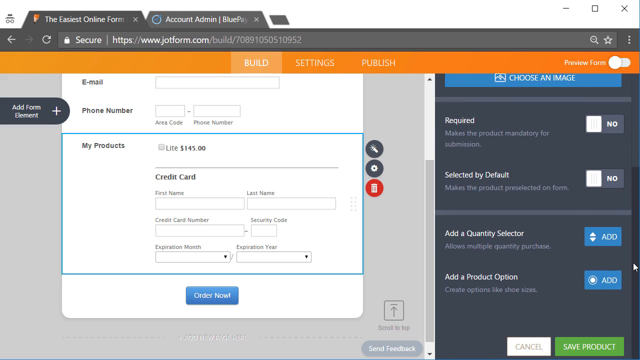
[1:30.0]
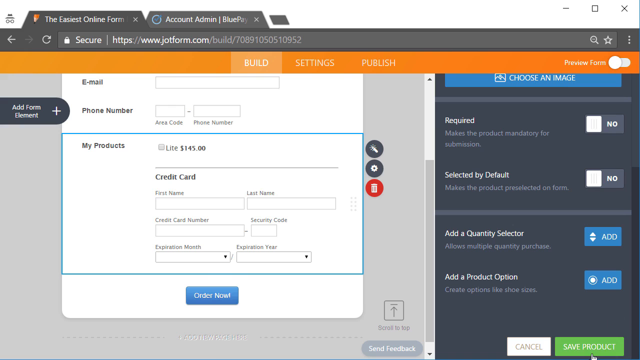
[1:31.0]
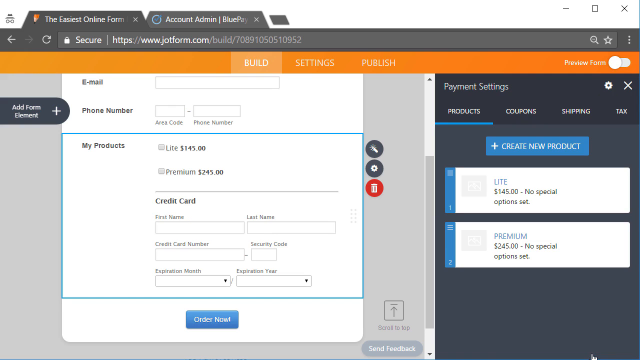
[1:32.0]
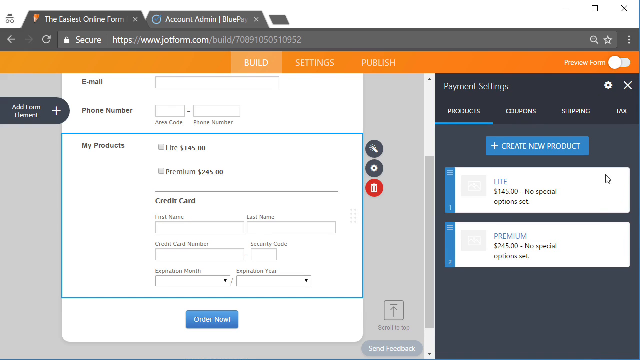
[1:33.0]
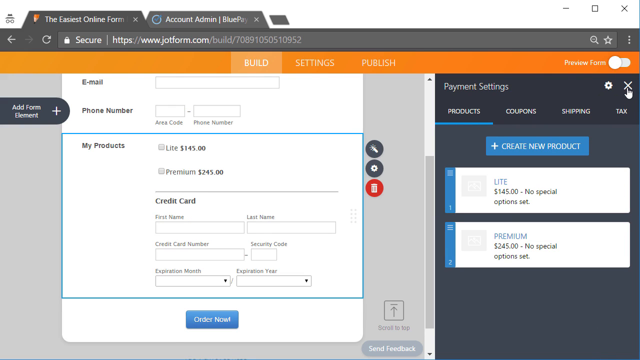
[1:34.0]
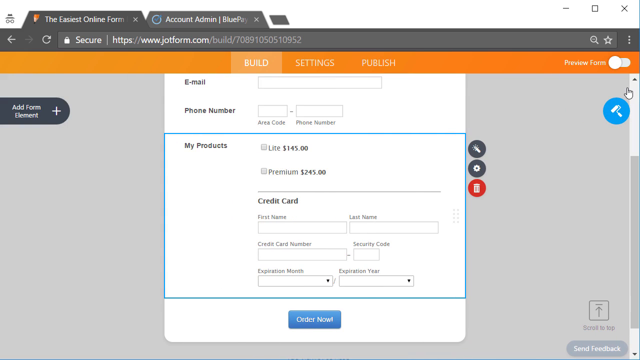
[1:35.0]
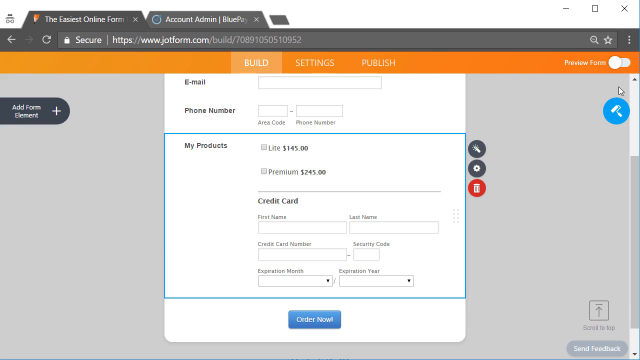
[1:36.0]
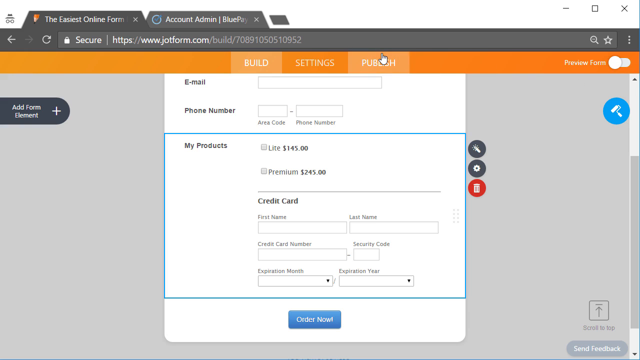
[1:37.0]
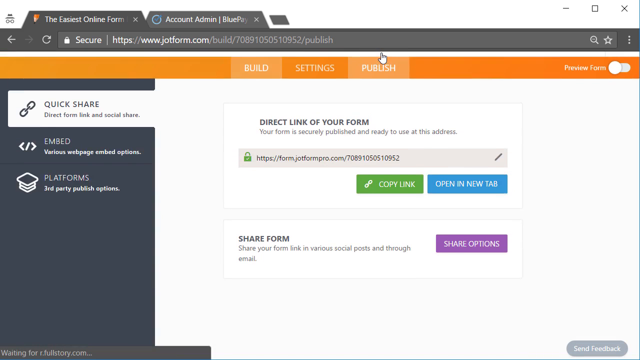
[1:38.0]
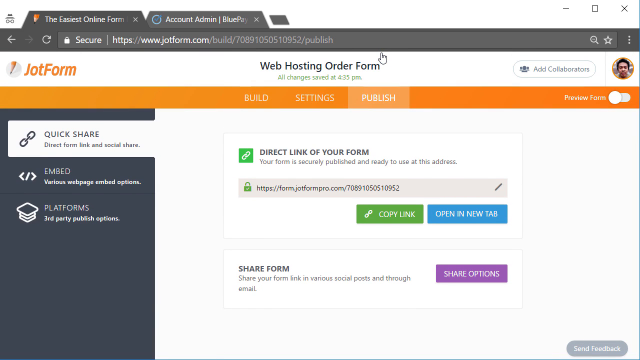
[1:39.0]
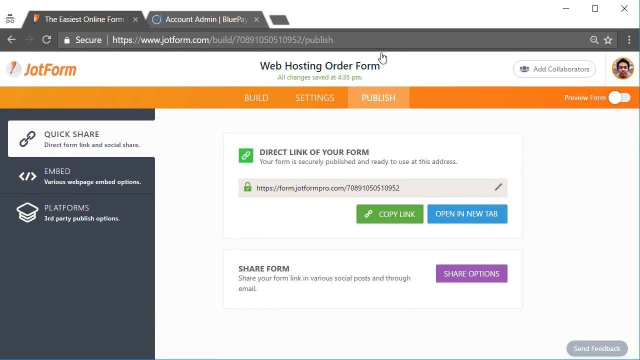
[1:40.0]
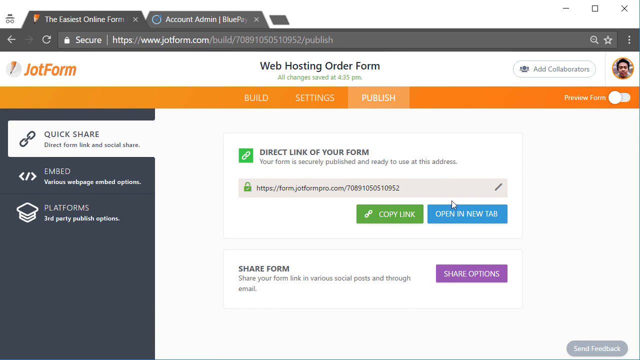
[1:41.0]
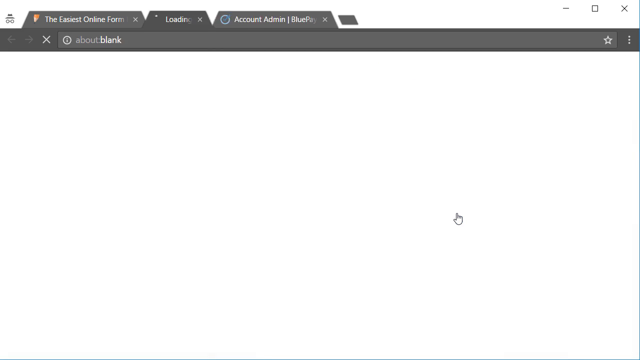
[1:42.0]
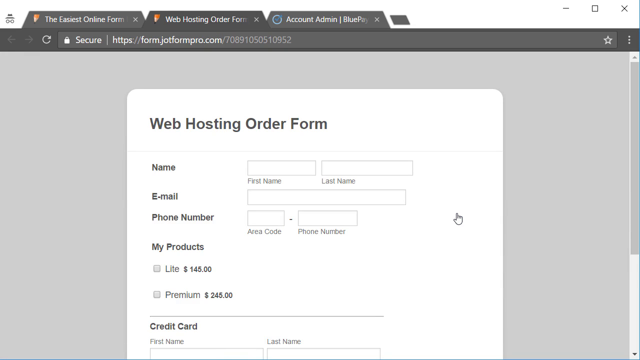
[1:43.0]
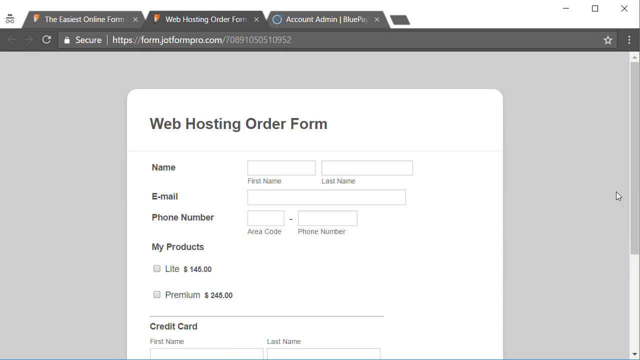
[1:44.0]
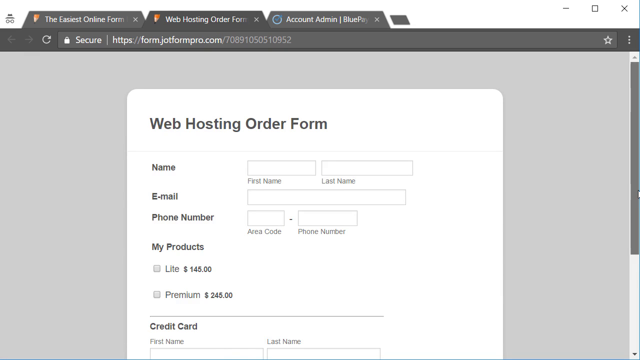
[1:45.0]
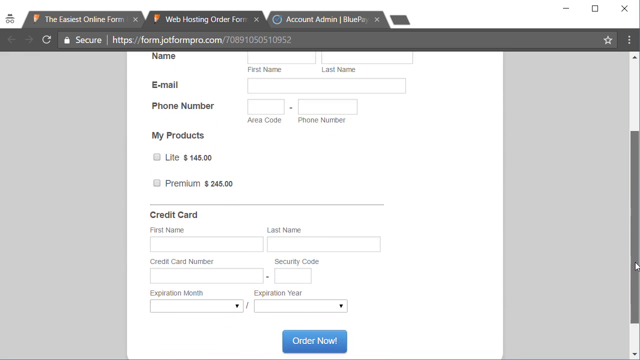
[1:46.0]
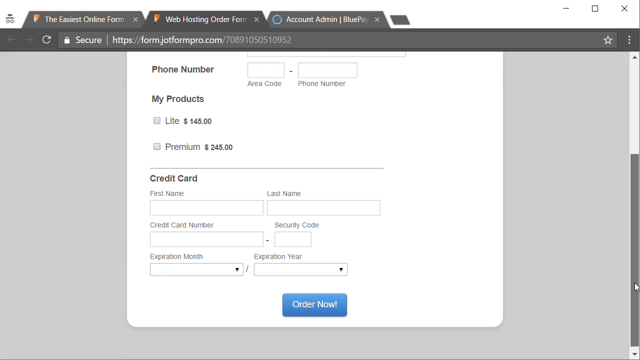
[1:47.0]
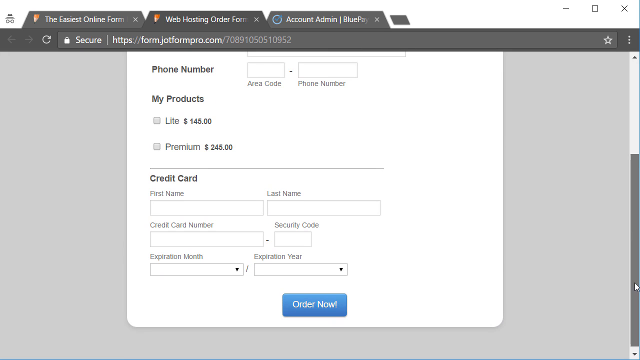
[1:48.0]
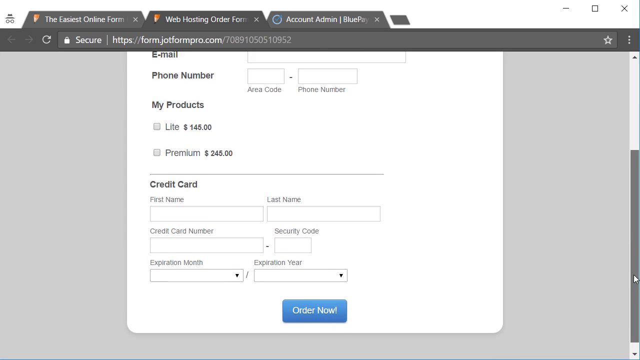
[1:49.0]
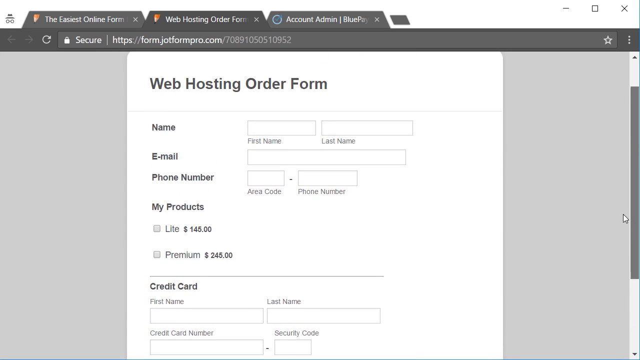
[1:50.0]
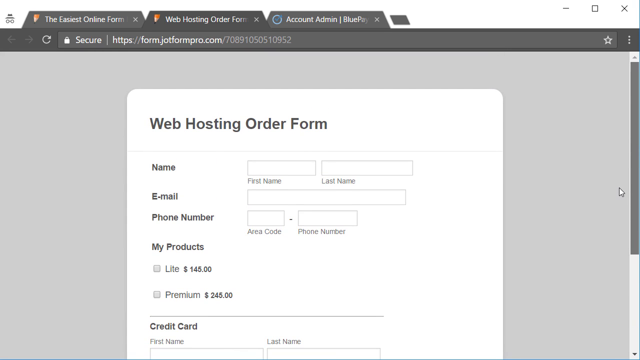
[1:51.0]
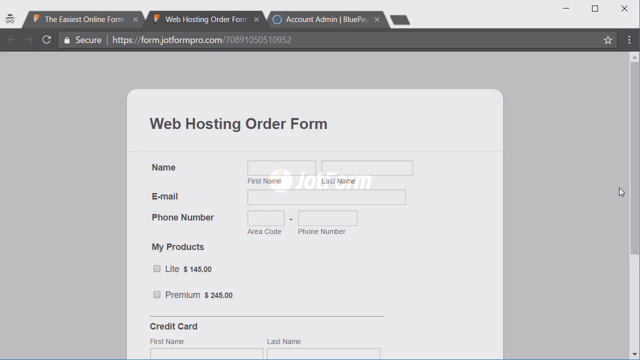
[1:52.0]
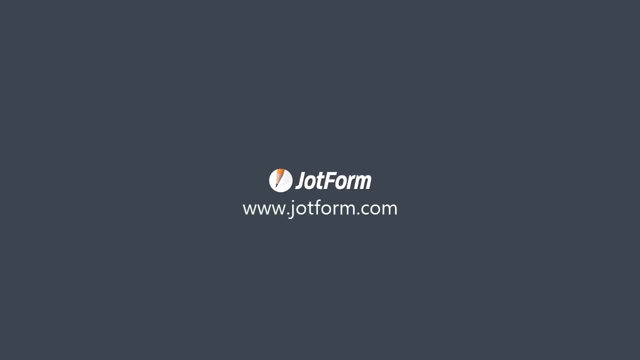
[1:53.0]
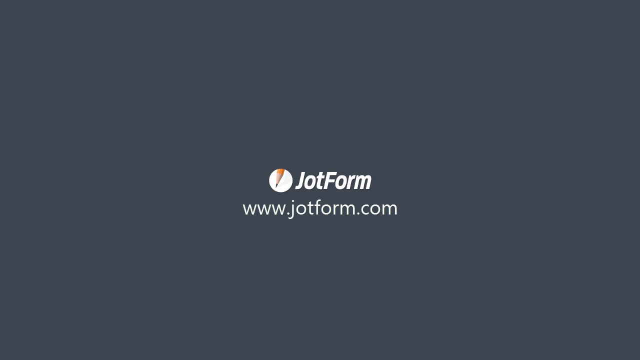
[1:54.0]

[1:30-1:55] After scrolling to the bottom of the widget, the green continue button is pressed once more, returning to a list of products under payment settings. Two white entries appear: the top one reads light, $145, no special option set, and the second reads premium, $245, no special option set; these seem to be the products the build offers. The user moves to the top of the wizard and clicks the X button to close it. The mouse then goes to the orange bar at the top of the screen and selects the option that reads "publish." A dark gray menu with white writing pops up on the left-hand side of the screen, with options including quick share, direct from link and social share, embedded web page embed options, and platforms with third-party publish options. The user moves down to a box labeled "direct link of your form" and clicks a blue button that reads "Open in New Tab," which opens a preview of the build in a new tab. The video then fades out, and the JotForm logo with "www.jotform.com" appears in the center of the screen in white font.